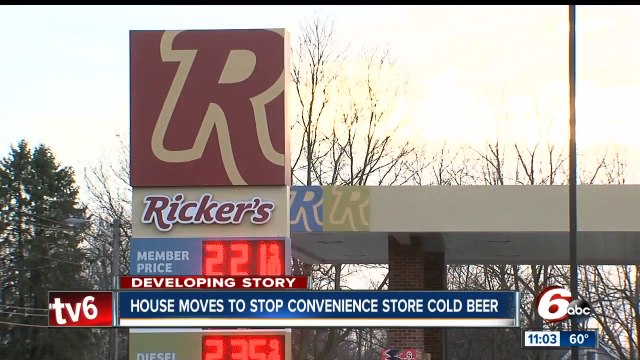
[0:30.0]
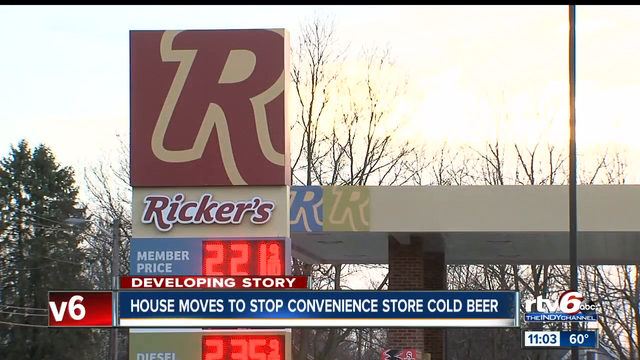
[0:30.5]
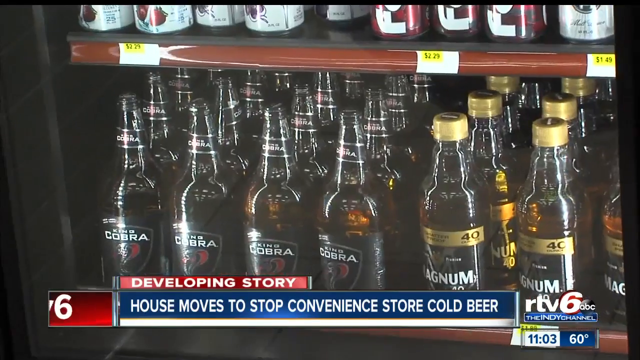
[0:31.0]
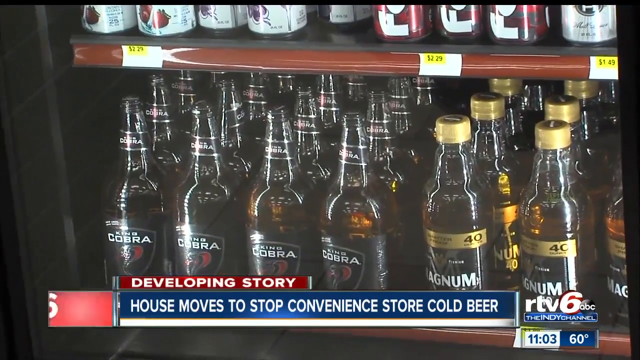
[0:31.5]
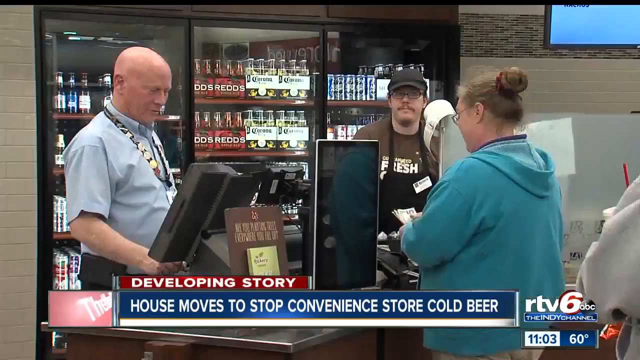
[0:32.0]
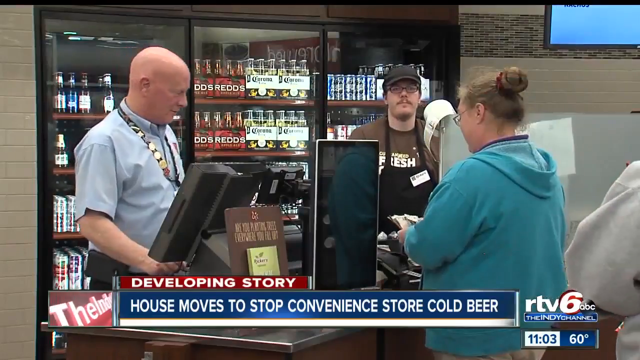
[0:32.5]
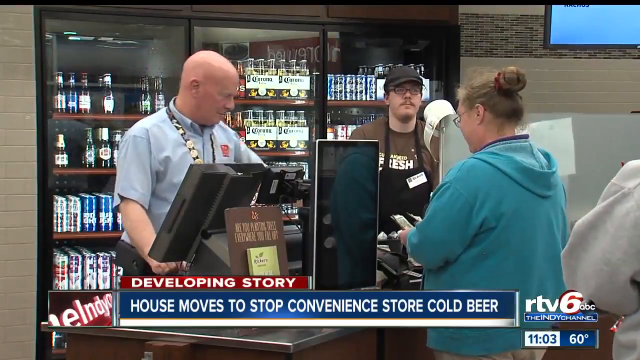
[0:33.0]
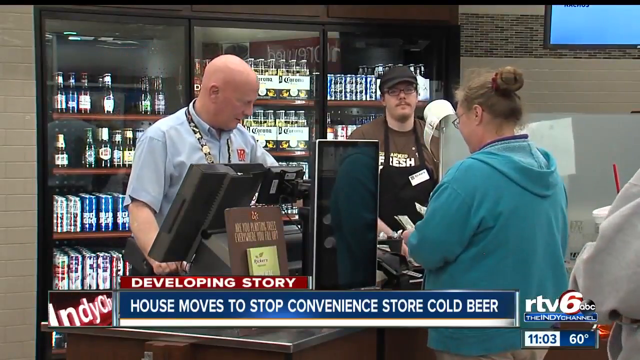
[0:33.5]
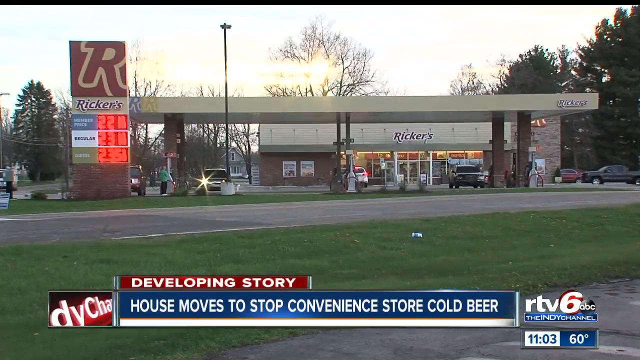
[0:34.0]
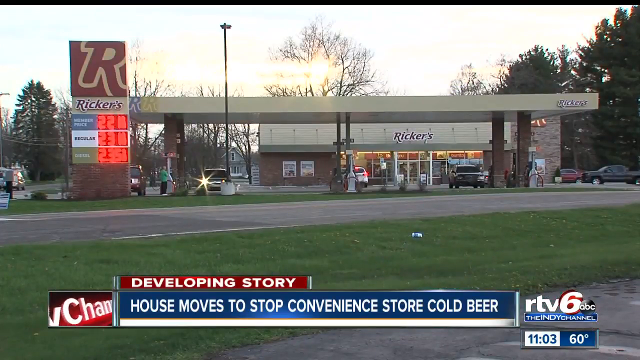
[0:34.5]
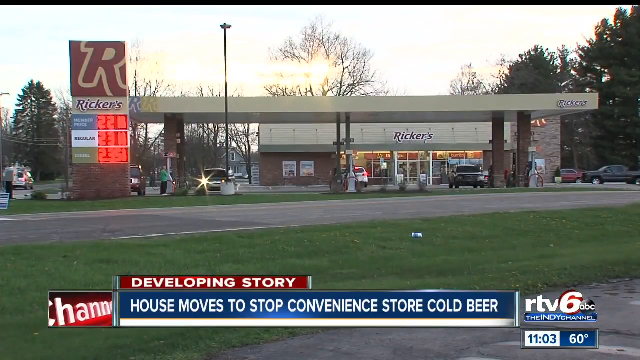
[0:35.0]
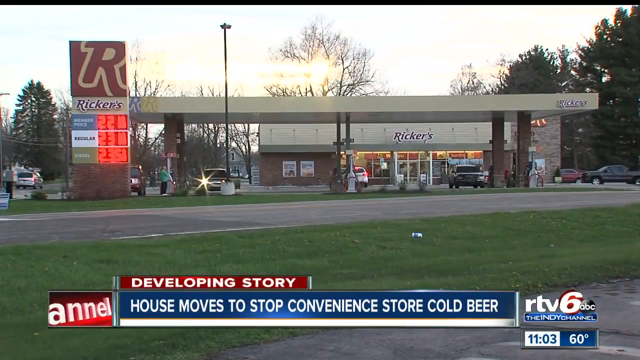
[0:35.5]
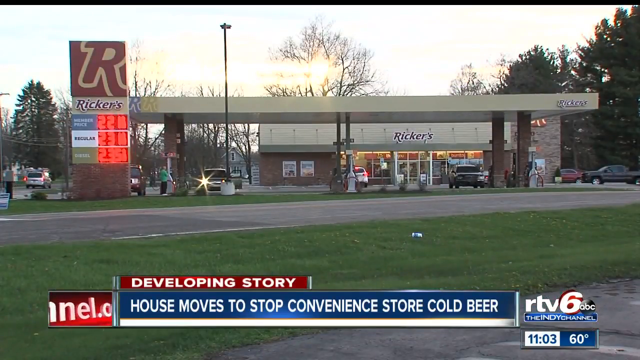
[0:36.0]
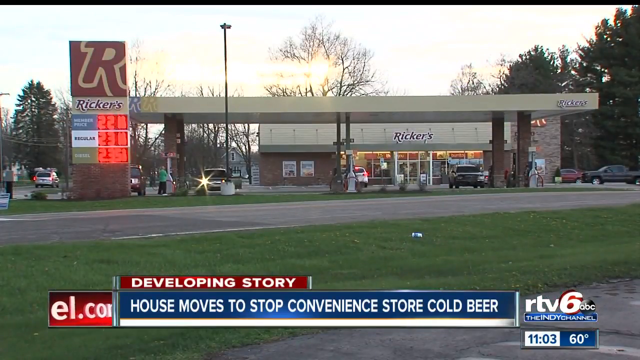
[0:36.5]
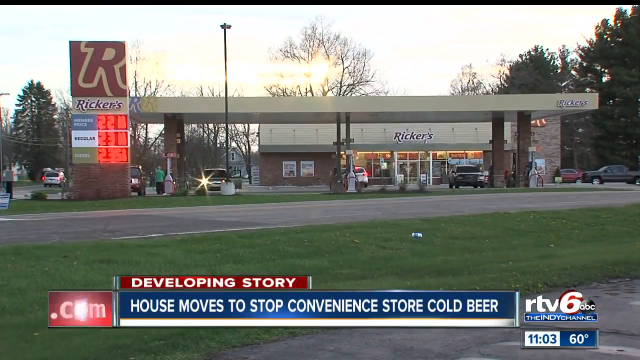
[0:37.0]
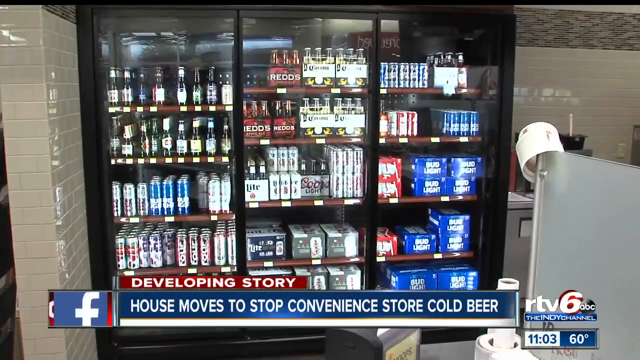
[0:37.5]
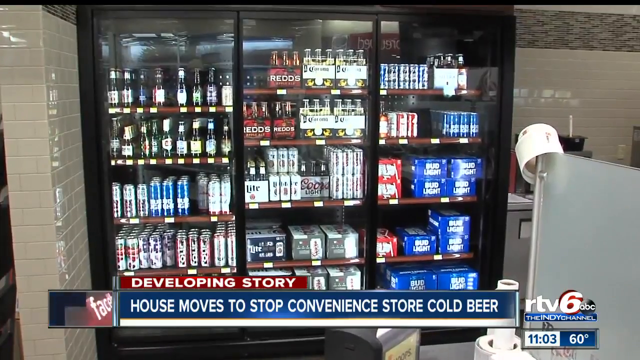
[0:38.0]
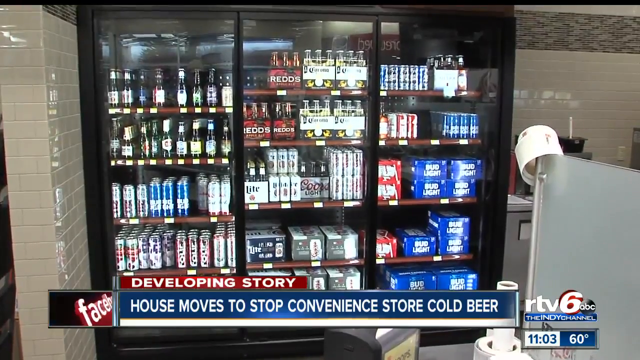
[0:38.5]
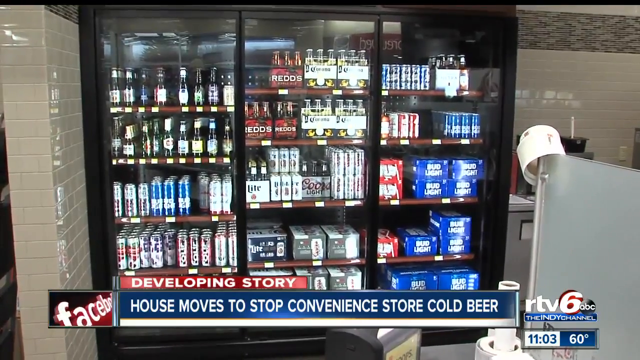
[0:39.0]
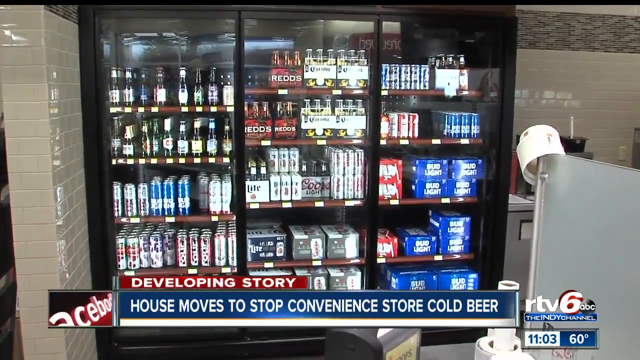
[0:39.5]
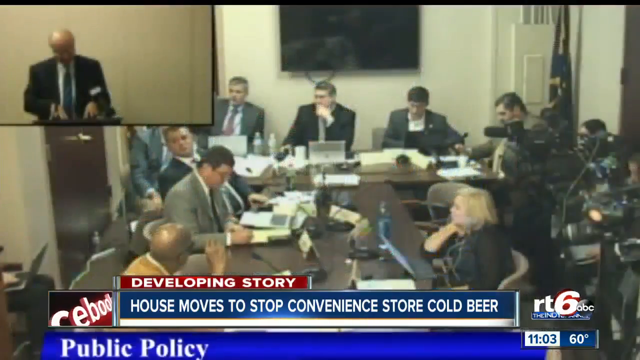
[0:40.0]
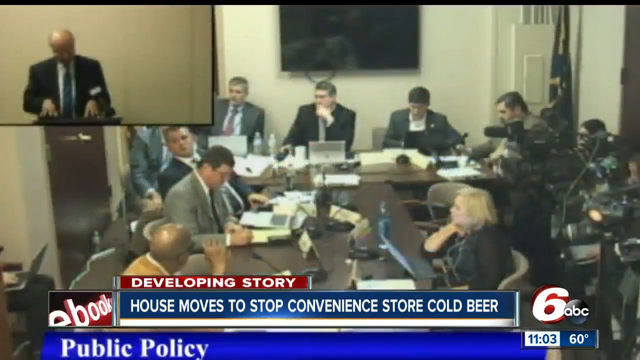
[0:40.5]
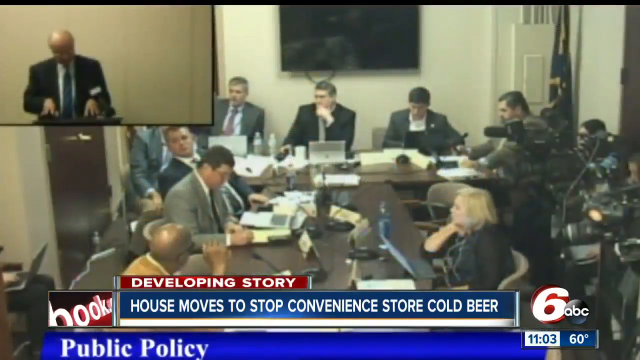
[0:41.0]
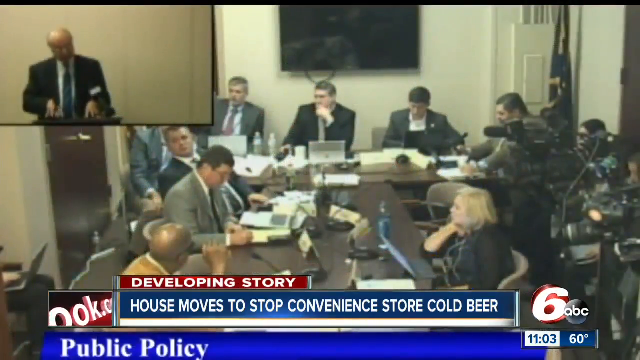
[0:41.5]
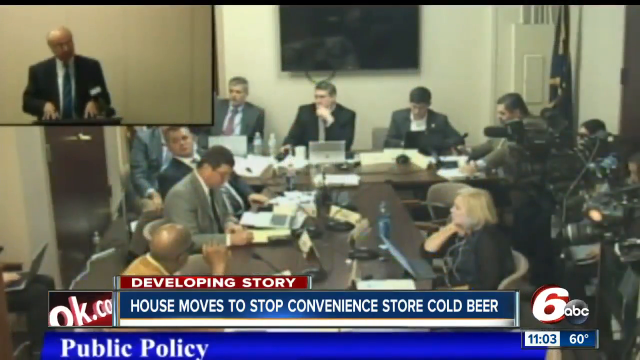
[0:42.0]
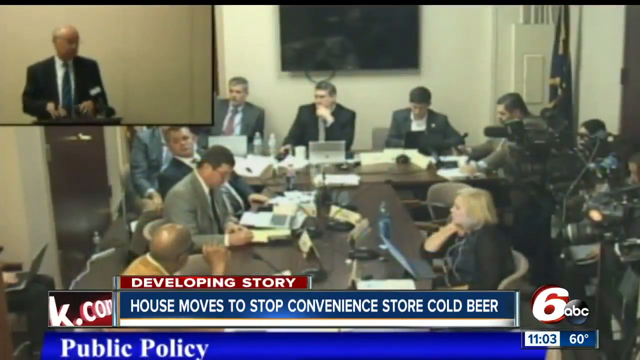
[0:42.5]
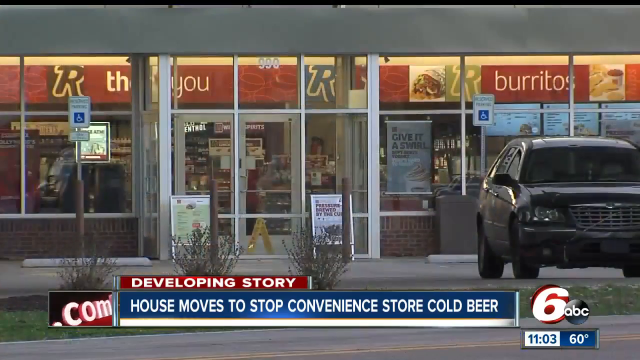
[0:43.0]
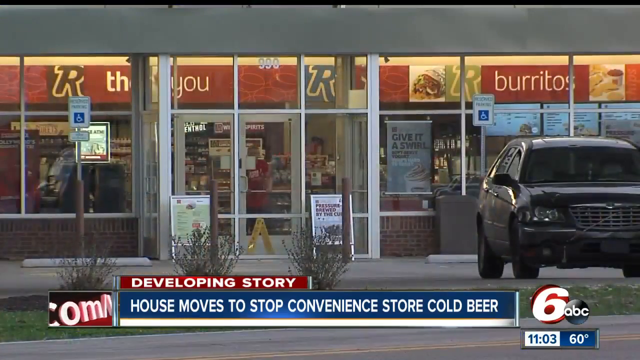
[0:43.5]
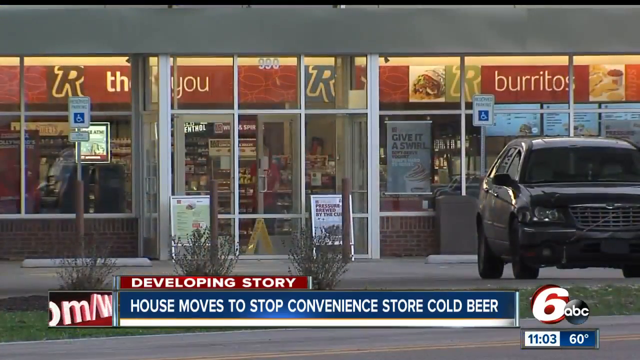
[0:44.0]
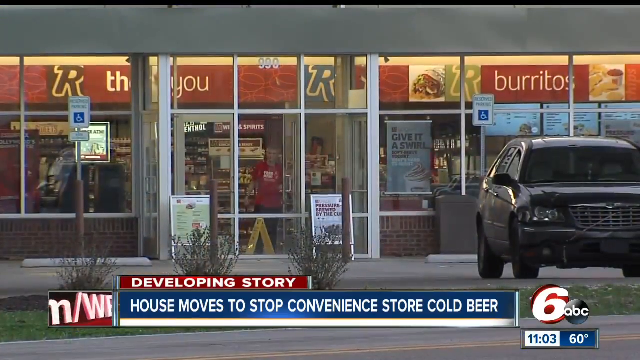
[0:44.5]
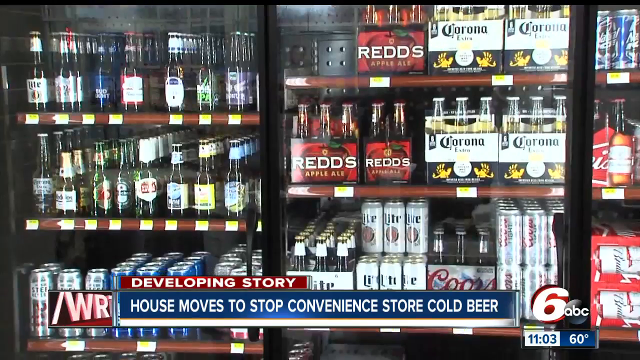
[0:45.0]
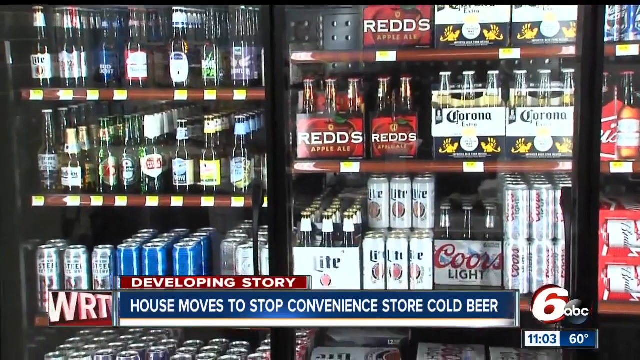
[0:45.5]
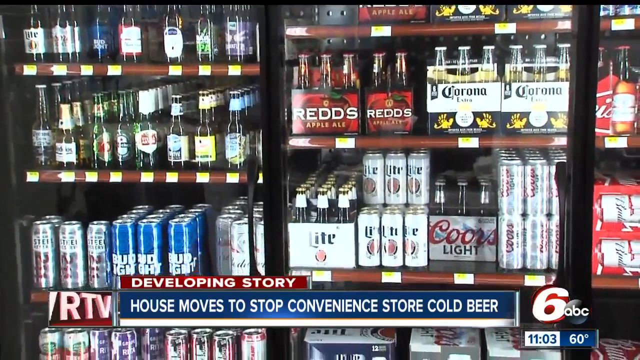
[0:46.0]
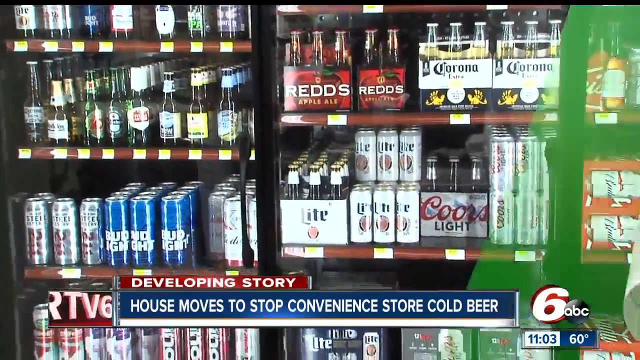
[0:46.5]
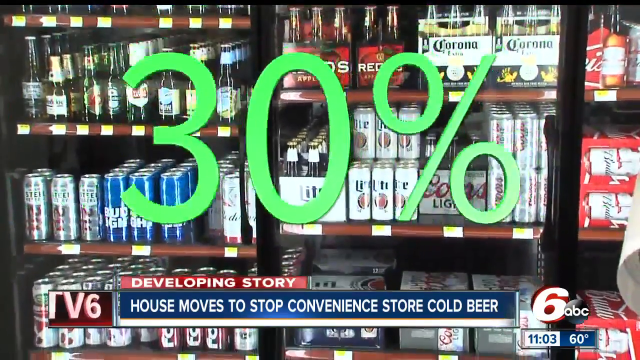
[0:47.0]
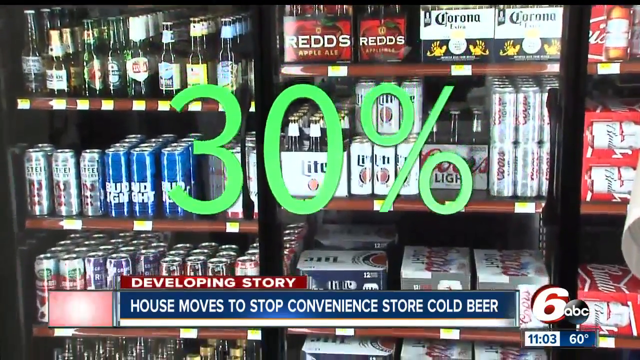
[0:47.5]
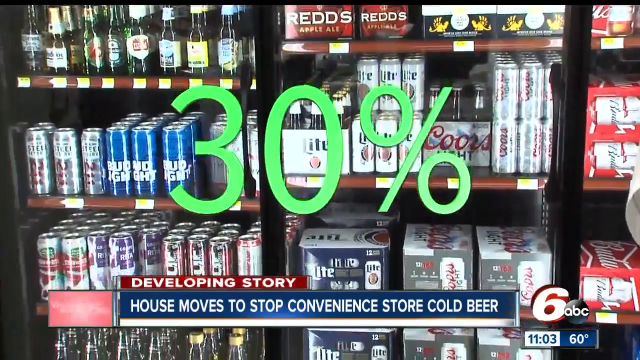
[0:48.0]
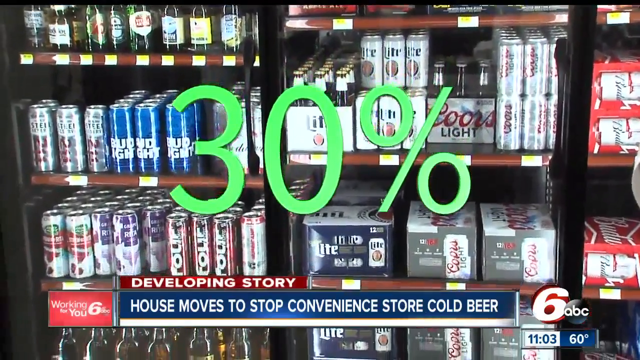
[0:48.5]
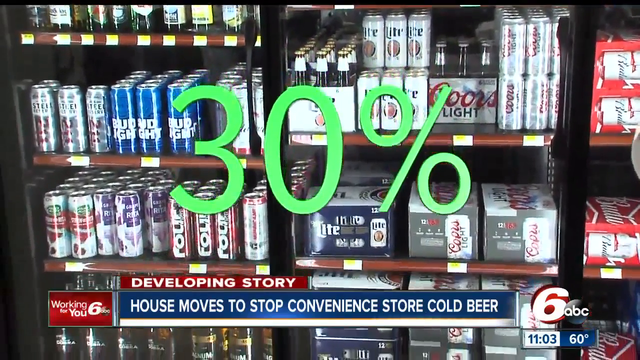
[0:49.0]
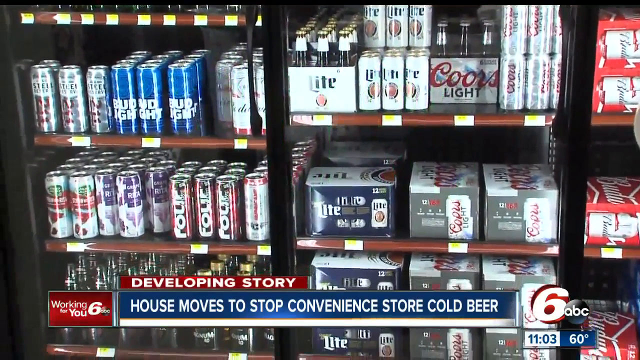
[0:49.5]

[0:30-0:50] The setting is a garage or petrol station called Rikers, with a logo written as an R. Text reads "member price 22.1 percent." A woman in a blue jacket is at the till, where two men are waiting. She is helped by a man with blonde hair, while another man in the background, wearing a black apron, a brown t-shirt, a cap and glasses, is showing cash. A full view of the petrol station follows, then a view of the whole beer collection with "30 percent" written. Next, people are seated in a boardroom, discussing; it looks like a formal meeting or presentation.